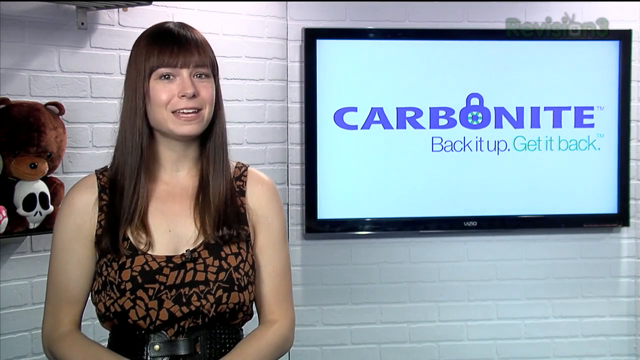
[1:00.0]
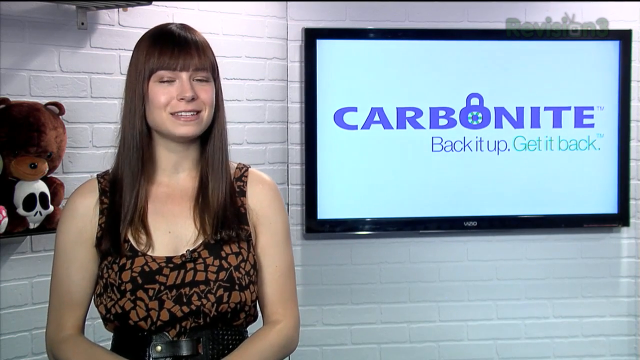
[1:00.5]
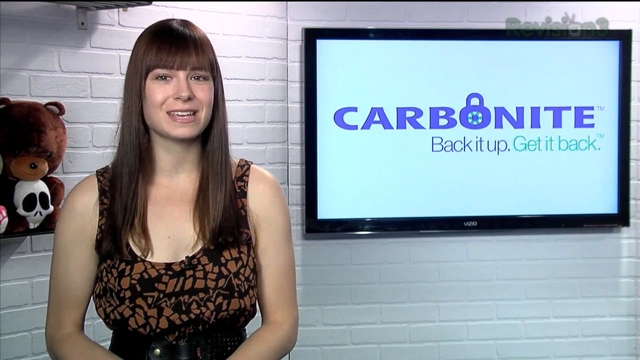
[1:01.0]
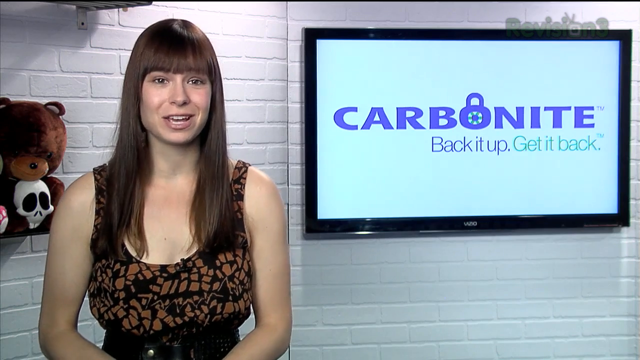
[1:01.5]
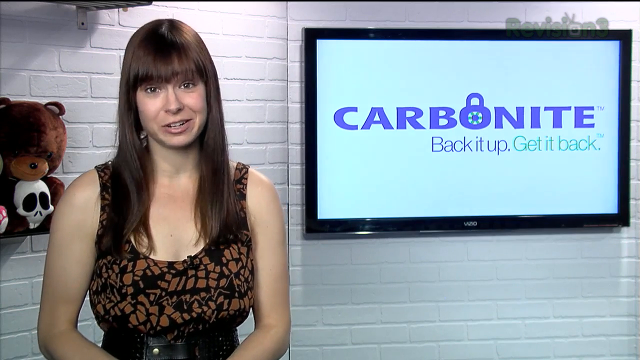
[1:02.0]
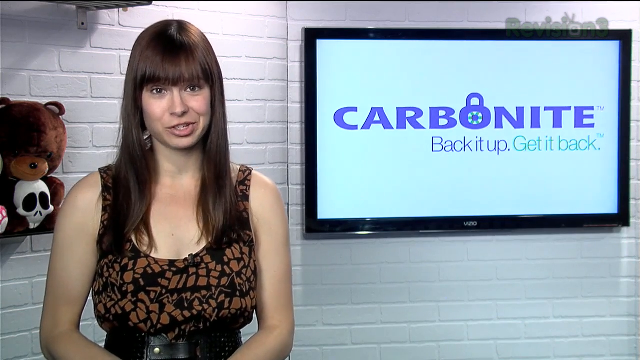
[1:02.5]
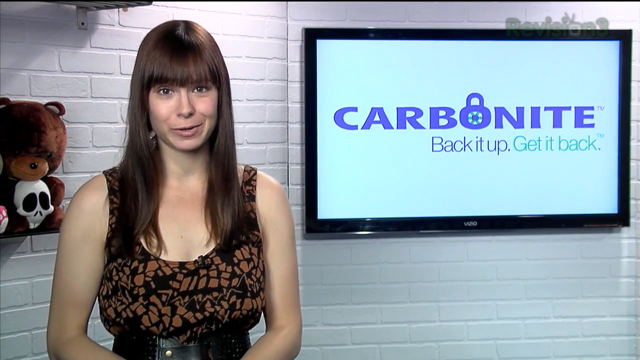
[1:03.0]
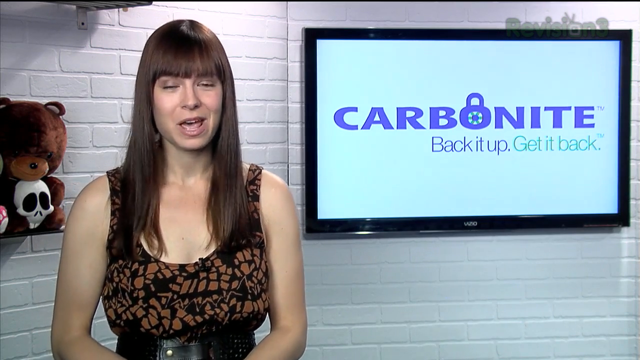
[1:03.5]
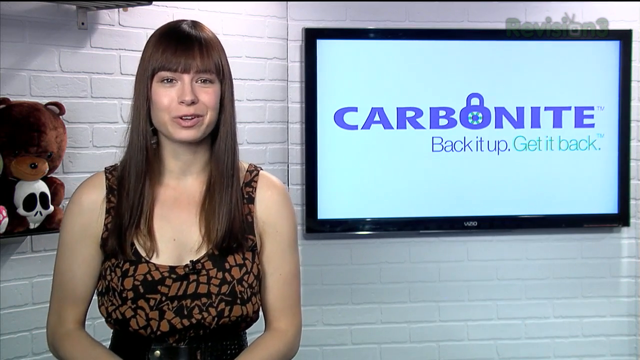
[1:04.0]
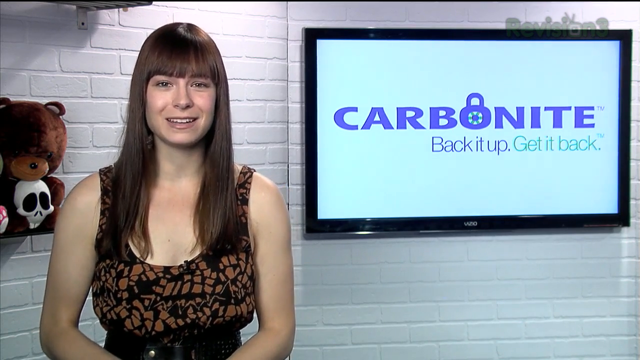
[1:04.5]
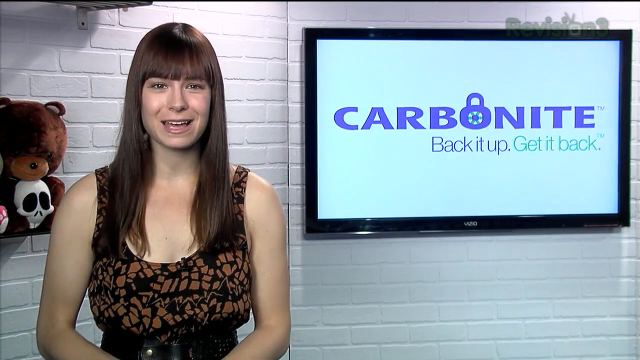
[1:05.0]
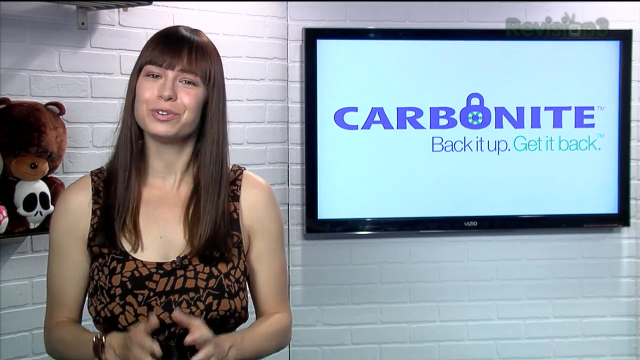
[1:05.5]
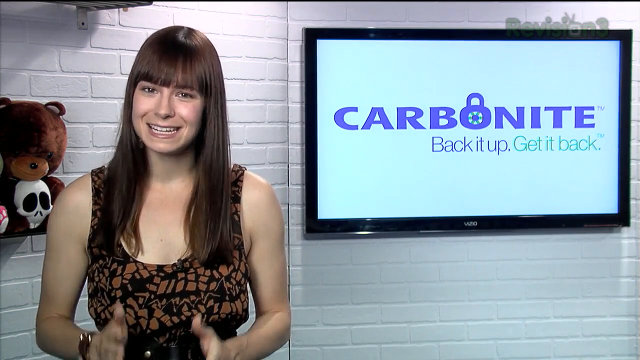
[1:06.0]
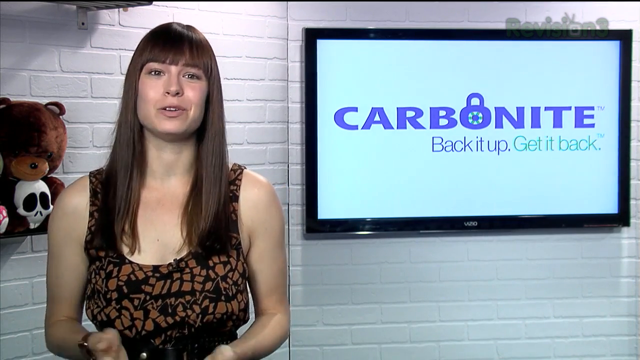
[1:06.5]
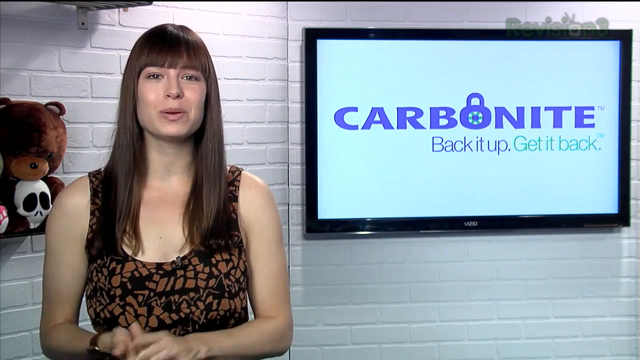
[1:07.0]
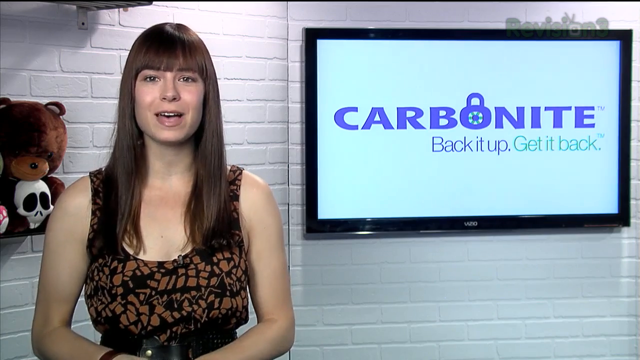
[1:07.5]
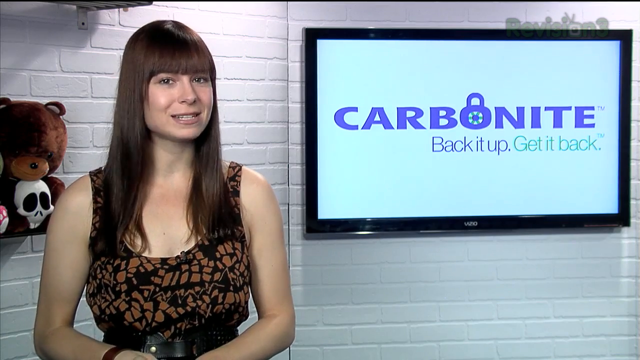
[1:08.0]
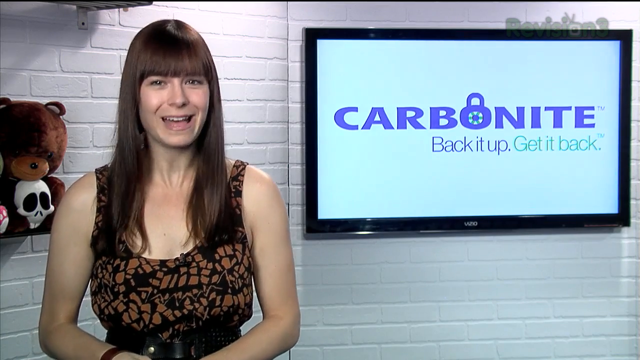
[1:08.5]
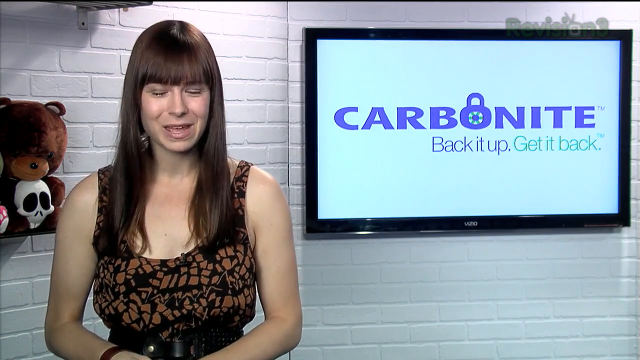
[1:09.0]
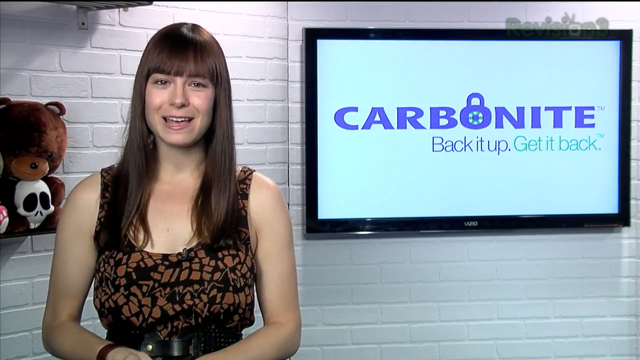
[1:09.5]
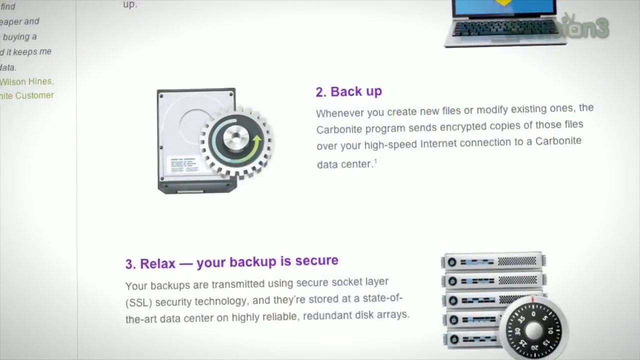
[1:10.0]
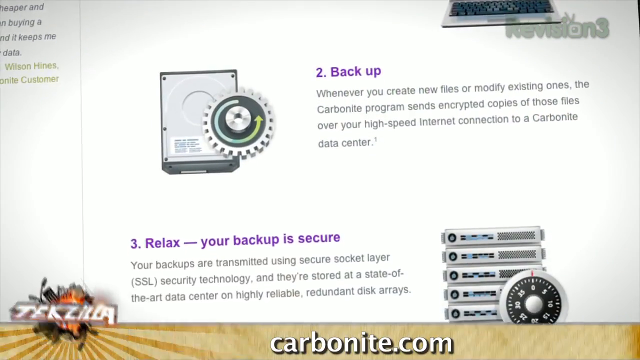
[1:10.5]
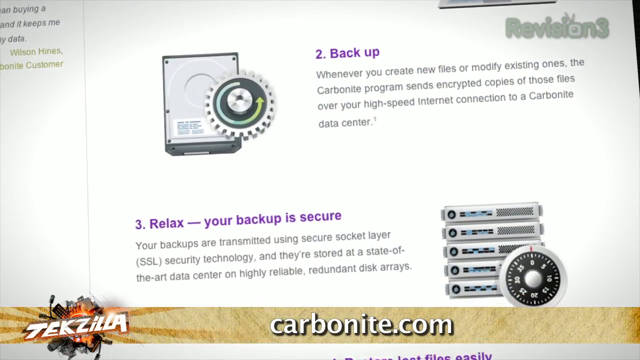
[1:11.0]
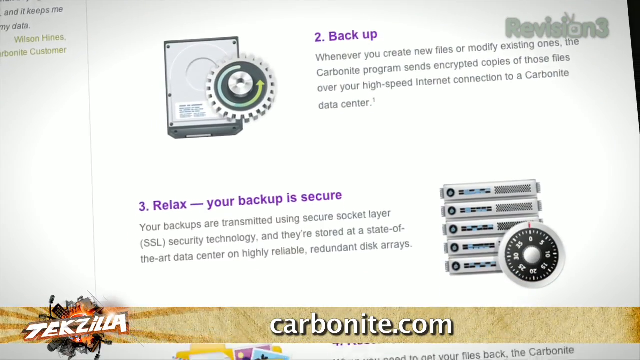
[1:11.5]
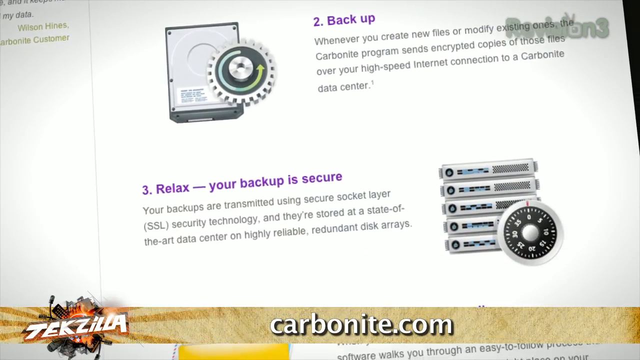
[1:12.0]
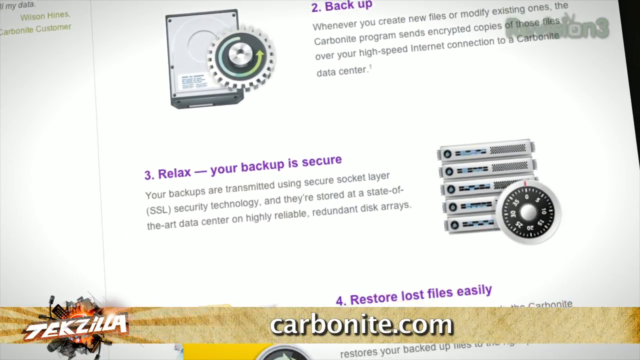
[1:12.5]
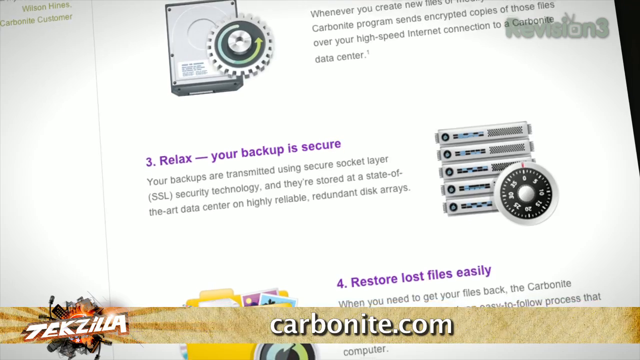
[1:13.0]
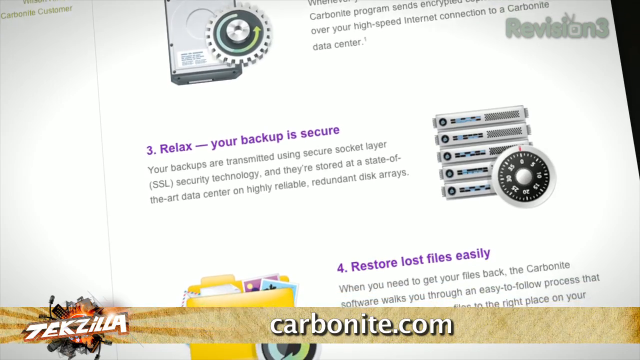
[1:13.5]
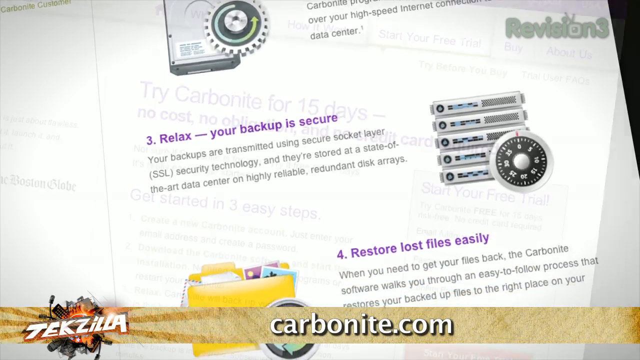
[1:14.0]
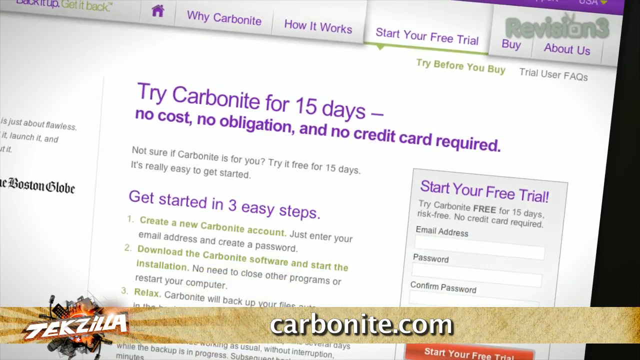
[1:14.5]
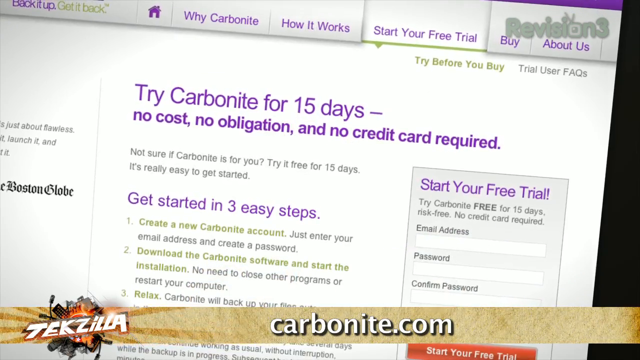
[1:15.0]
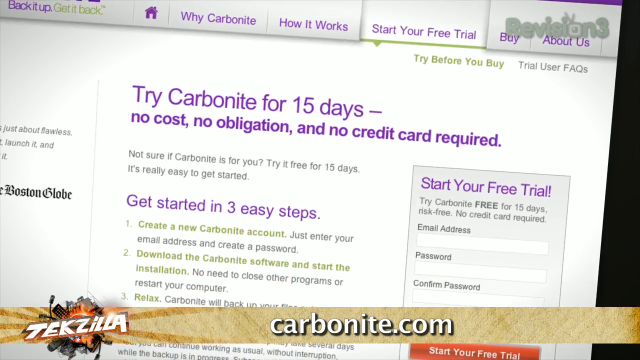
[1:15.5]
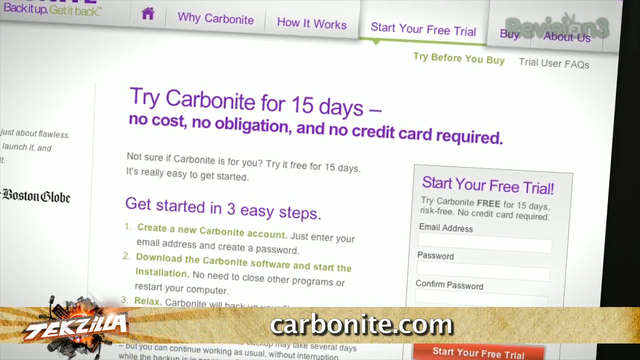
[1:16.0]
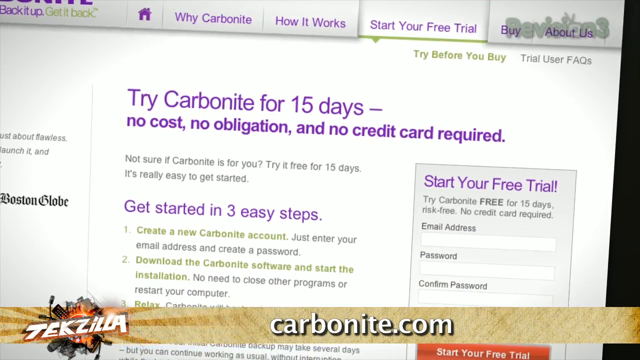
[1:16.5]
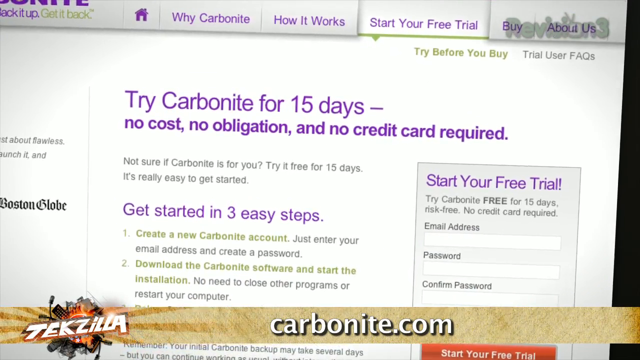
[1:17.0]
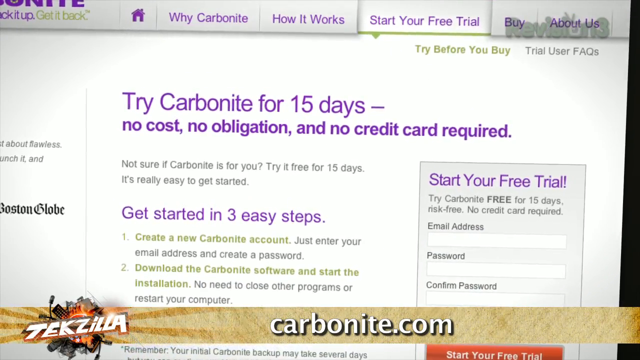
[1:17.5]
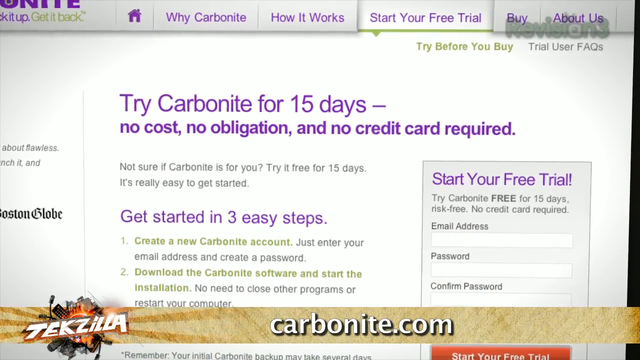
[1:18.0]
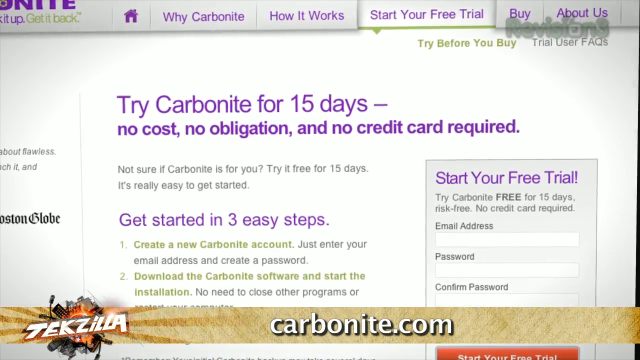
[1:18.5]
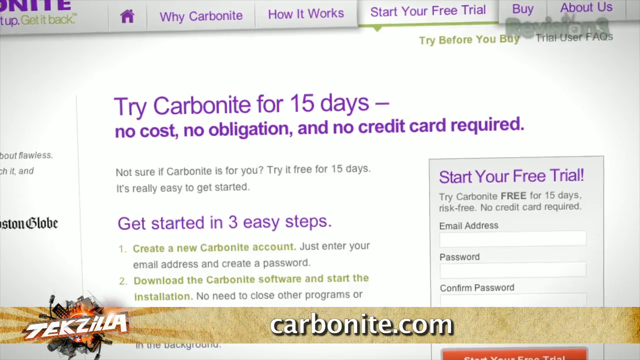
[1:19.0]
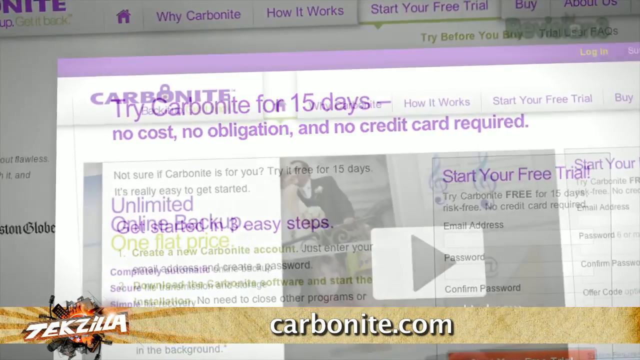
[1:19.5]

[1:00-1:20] The female speaker in her late 20s continues to speak in front of a well-lit white brick wall. The television behind her left shoulder now displays "carbonite" in purple, "back it up" in purple and "get it back" in green. She looks at the camera, gesturing slightly with her hands, with a small smile on her face. The video transitions to an image on a computer screen showing a number 2 with the words "back it up. Whenever you create new files or modify existing ones, the Carbonite program sends encrypted copies of those files over your high speed internet connection to a Carbonite data center." Below is a number 3 with "relax, your backup is secure. Your backups are transmitted using Secure Socket Layer SSL security technology and they are stored at a state of the art data center on highly reliable redundant disk arrays". The Tekzilla logo is visible in the bottom left-hand corner, and the words "Carbonite.com" appear across the bottom of the screen in white on a yellow background. The video then transitions to the words "try Carbonite for 15 days, no cost, no obligation, and no credit card required". A rectangle on the far right is for starting a free trial, and in the center of the screen the words "Get Started in 3 Easy Steps" appear in purple.